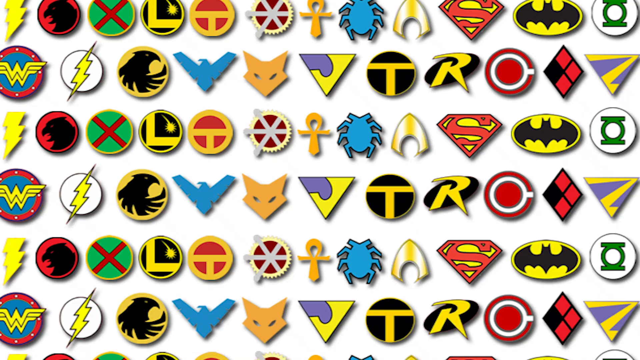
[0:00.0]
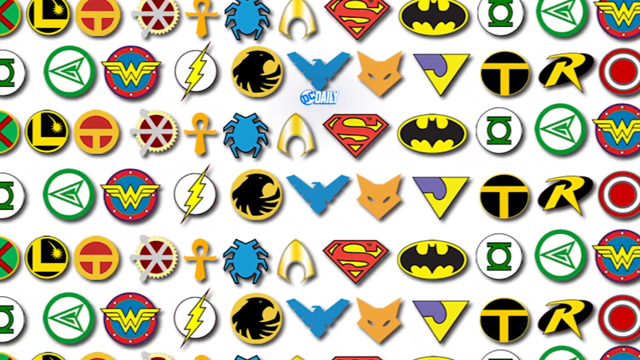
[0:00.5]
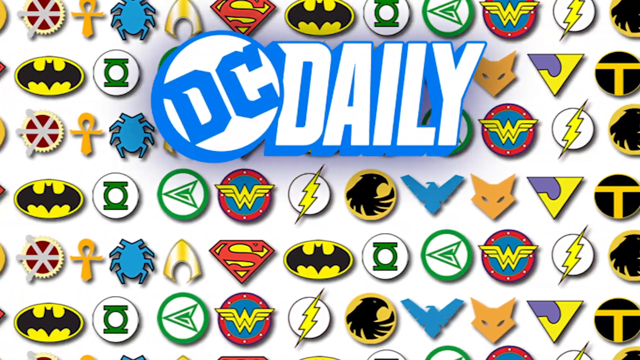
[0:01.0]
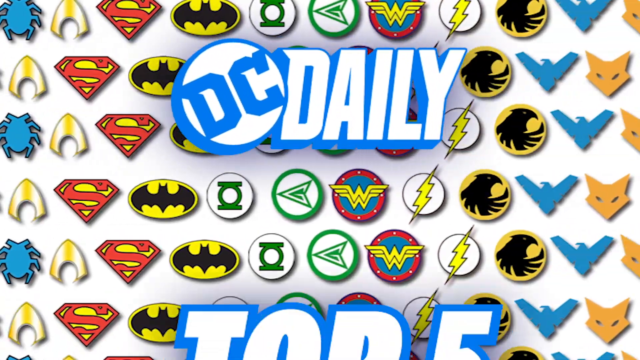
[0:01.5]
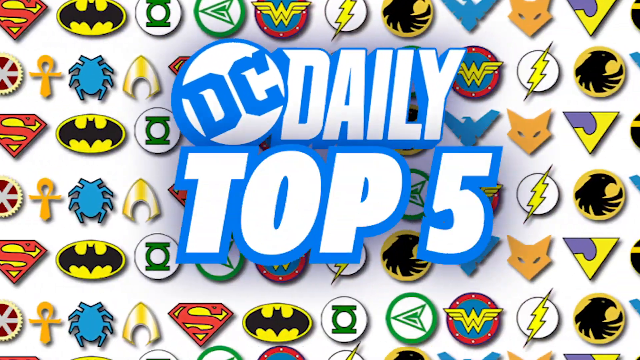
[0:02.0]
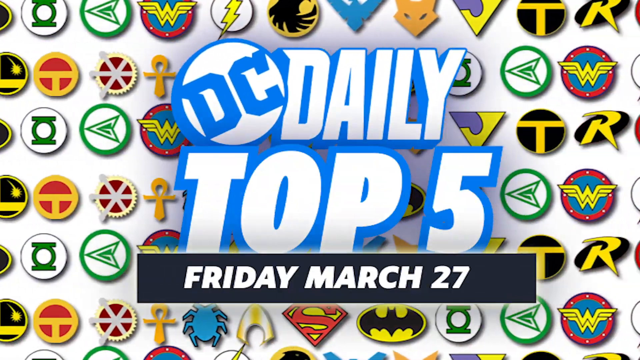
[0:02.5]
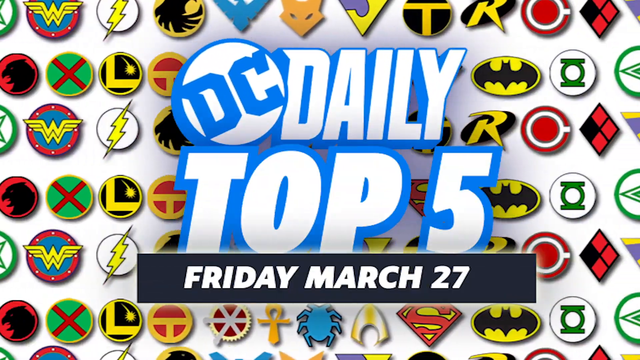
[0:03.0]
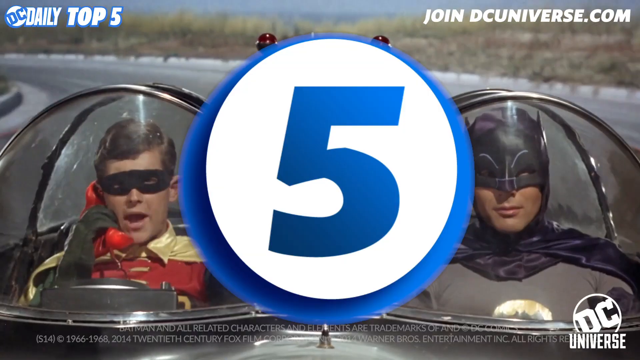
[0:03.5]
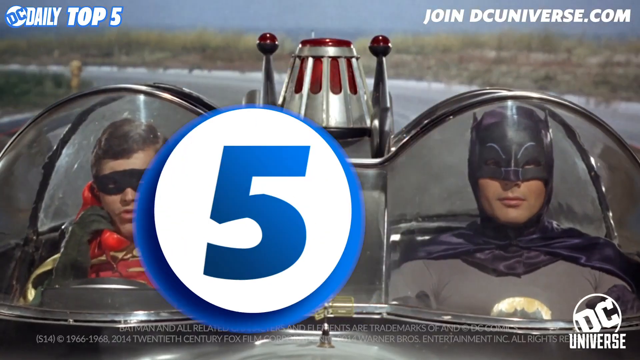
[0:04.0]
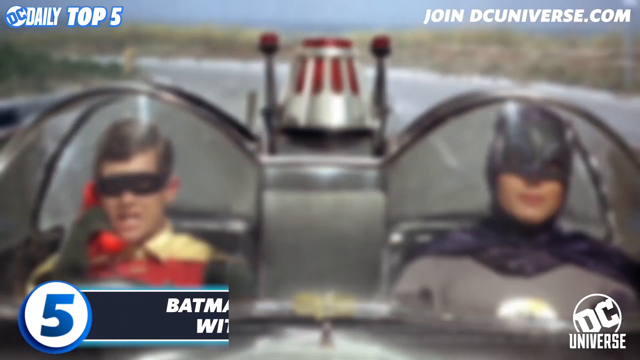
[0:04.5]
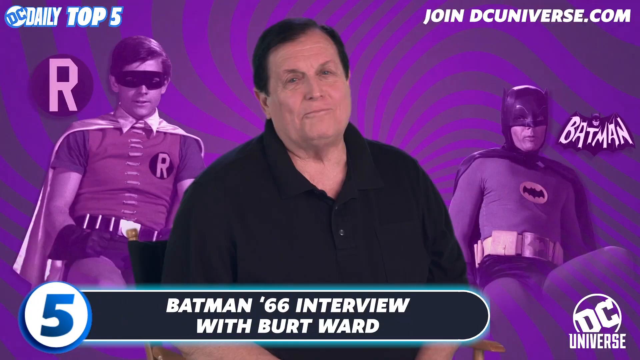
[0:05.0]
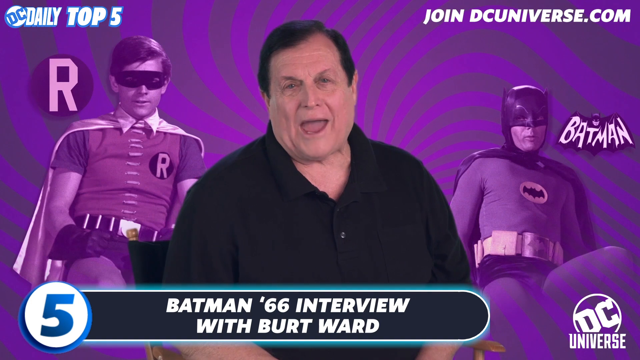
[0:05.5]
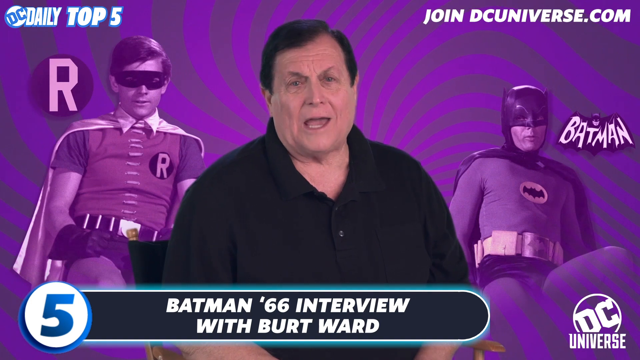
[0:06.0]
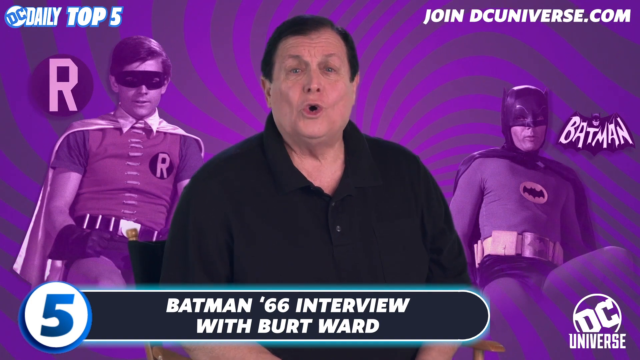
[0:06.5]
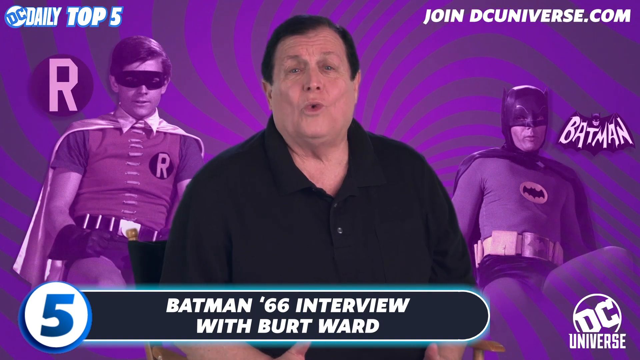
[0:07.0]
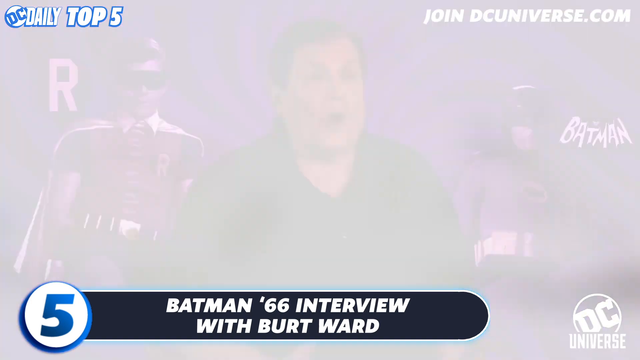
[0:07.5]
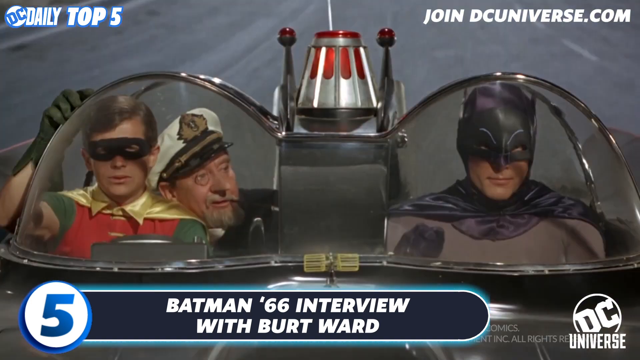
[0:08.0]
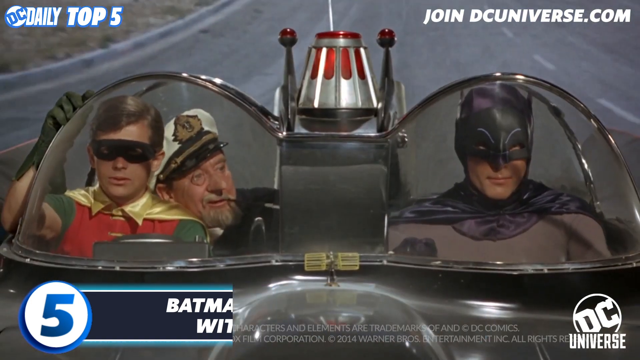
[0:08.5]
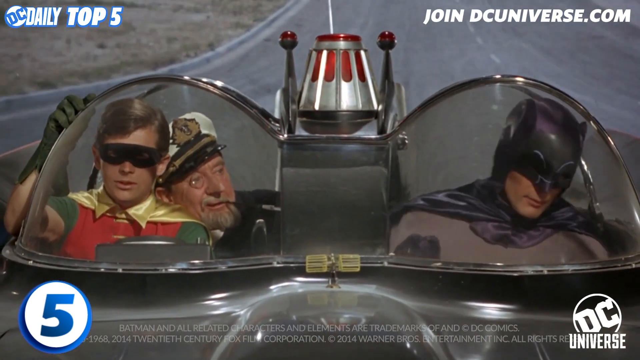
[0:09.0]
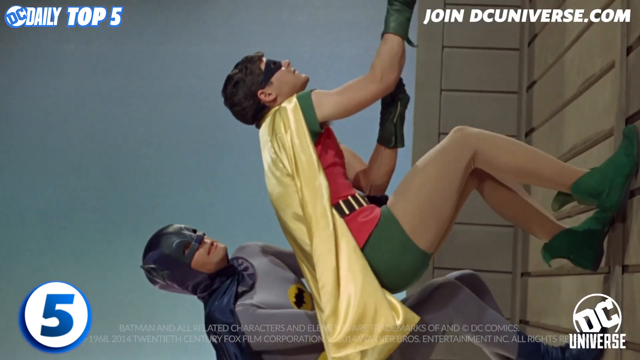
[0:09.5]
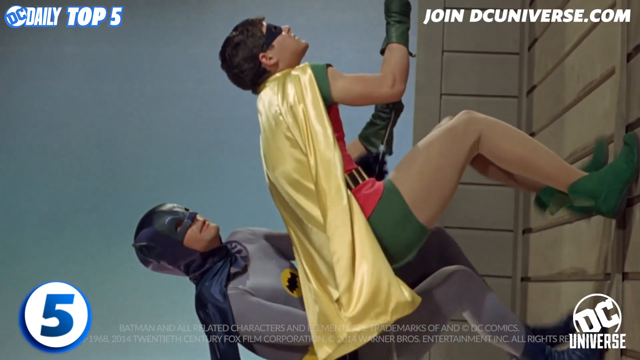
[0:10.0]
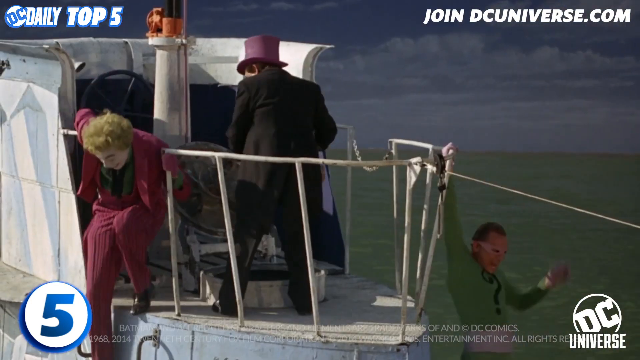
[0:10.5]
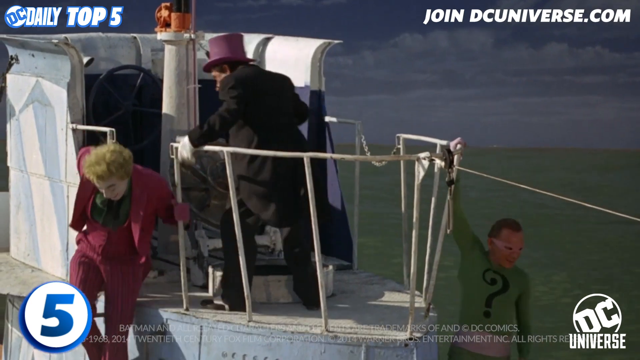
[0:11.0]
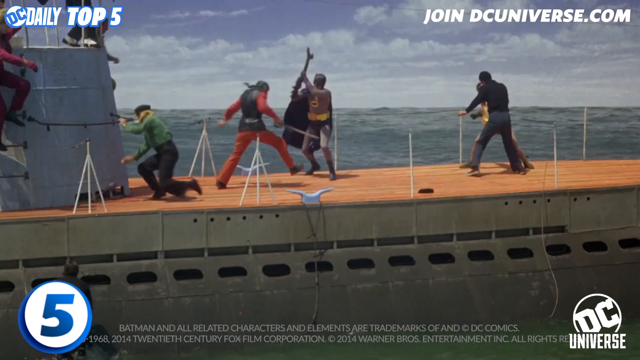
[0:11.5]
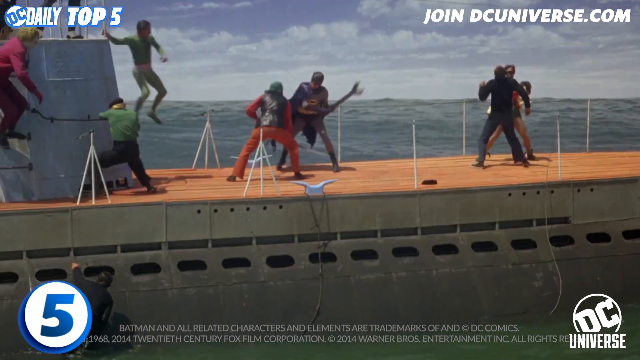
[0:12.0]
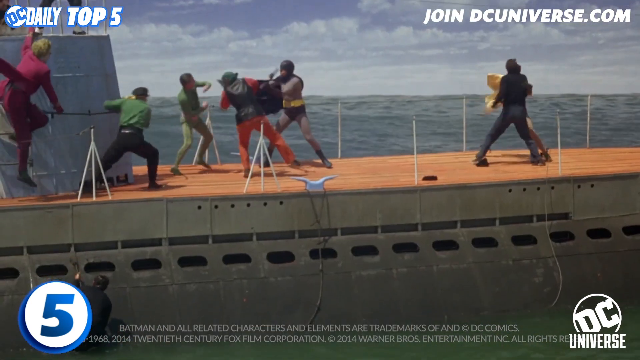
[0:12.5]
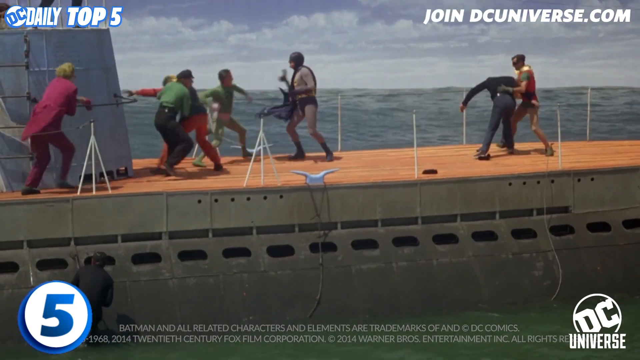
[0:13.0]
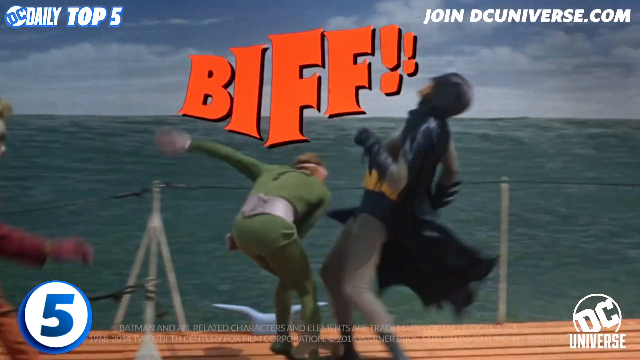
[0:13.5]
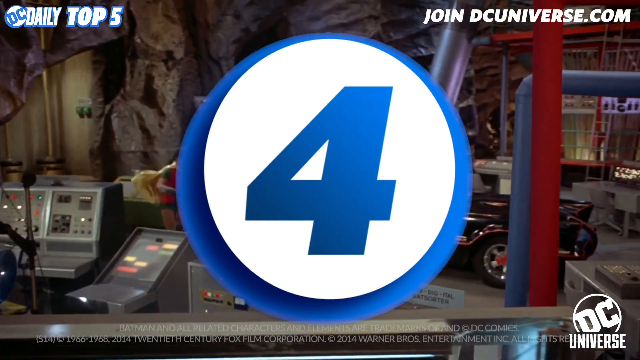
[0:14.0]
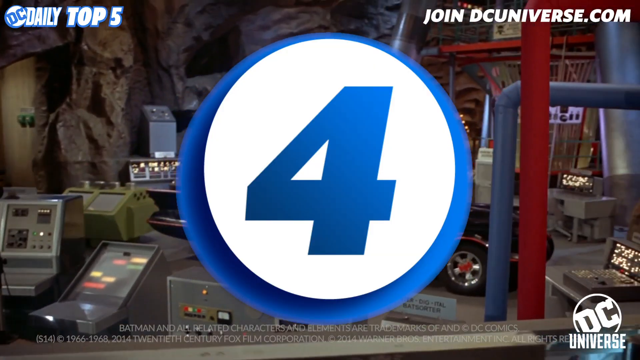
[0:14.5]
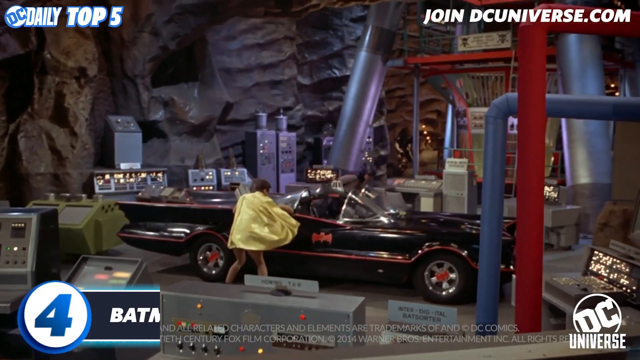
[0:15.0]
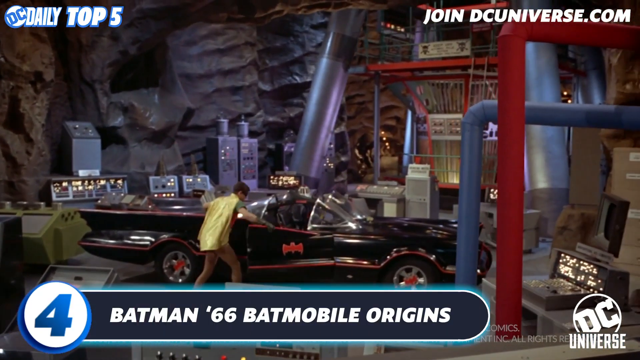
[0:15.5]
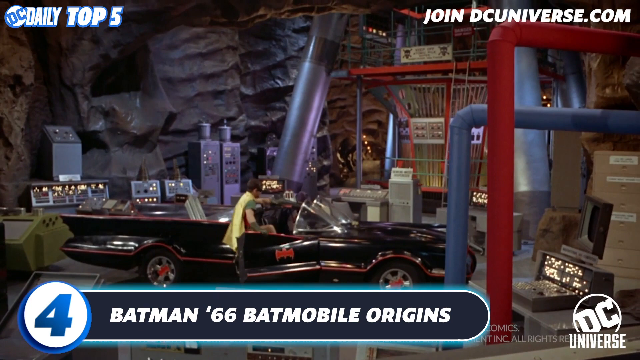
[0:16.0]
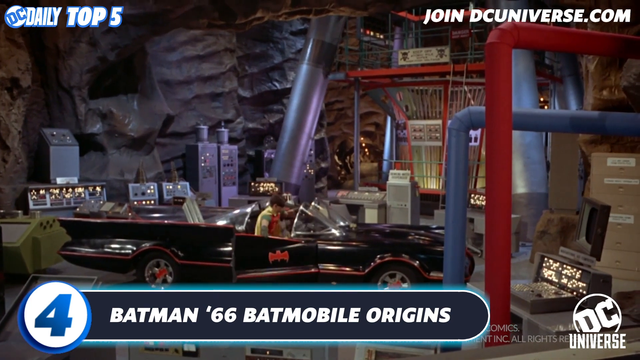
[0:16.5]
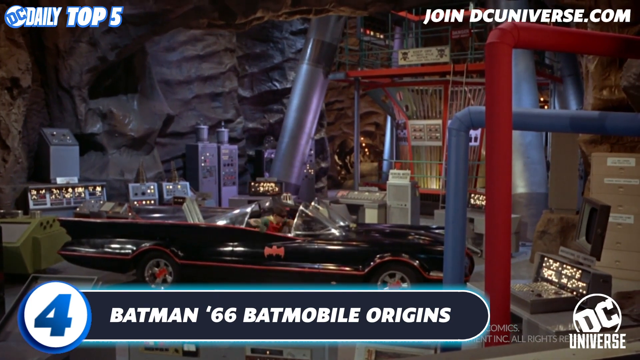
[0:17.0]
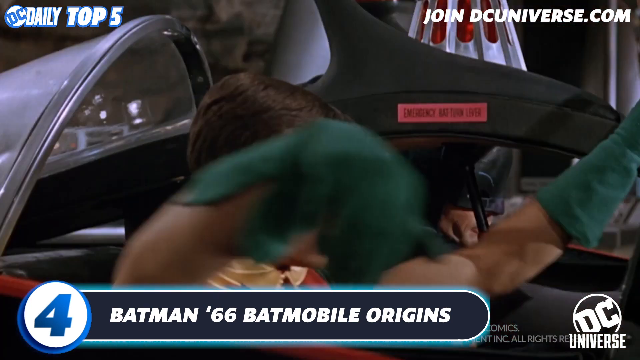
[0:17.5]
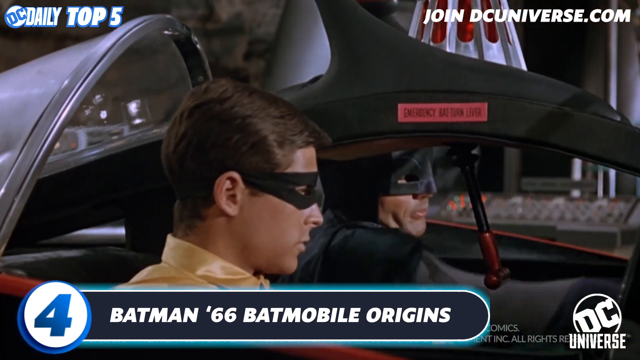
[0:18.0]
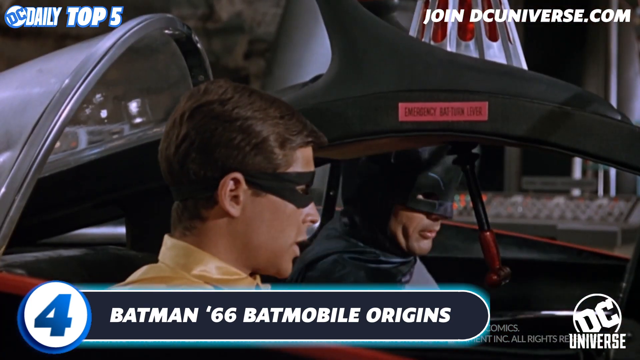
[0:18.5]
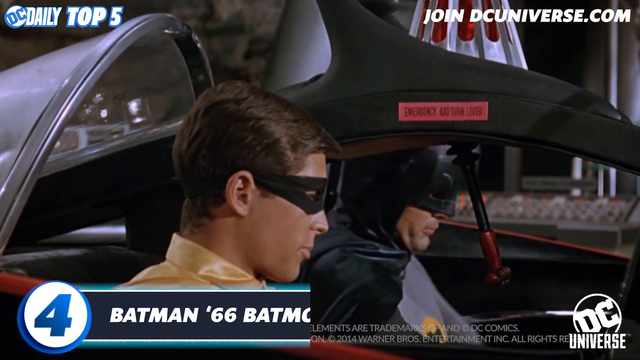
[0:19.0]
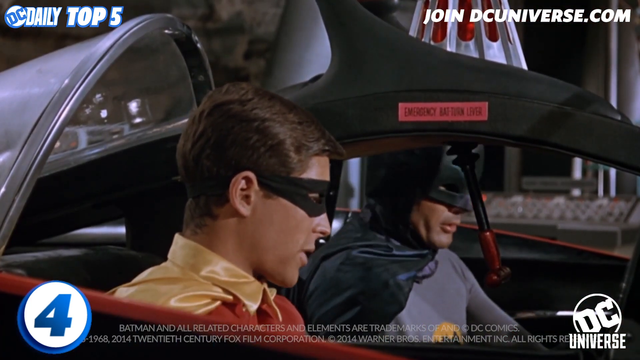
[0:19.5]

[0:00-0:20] The video opens on a white background filled with round circles, each holding a DC character's logo, arranged six up and down and twelve left and right. The odd-numbered rows move to the left and the even-numbered rows move to the right. Over this pops up a white circle with a blue "DC" in it. To its right, "daily" appears in white with a blue border, and below it "top five" in white with a blue border. Beneath that, a black bar carries white lettering reading "Friday, March 27th." The video cuts to the old Batman TV show: Batman is on the right and Robin on the left, sitting in the car with a little glass dome over them. "DC daily, top five" is in the top left, and on the right side white text reads "join dcuniverse.com." A big blue number five comes in at the center on a white background with a blue border that is thicker on the bottom and sides than on the top. Robin is talking on a telephone. The video cuts to a man in the center with black hair and a black button-up shirt; he is clean shaven and kind of heavyset. Robin is to his left and Batman to his right. Across the bottom, the number five is in the left corner, white text reads "Batman 66 interview with Burt Ward," and the DC Universe logo is in the bottom right corner. The video cuts back to the Batman footage, where a sailor is visible in the seat behind Robin; he has a pipe and a captain's hat. Robin and Batman climb a wall, and the Joker is on a boat with the Riddler. A big fight breaks out on the boat: Robin fights a man on the left while Batman fights three or four people on the right side. Number four appears, and text in the bottom left corner reads "Batman 66, Batmobile origins." The Batmobile is black with a red Batman logo on it. Batman and Robin get in the car, and the camera zooms in on them.